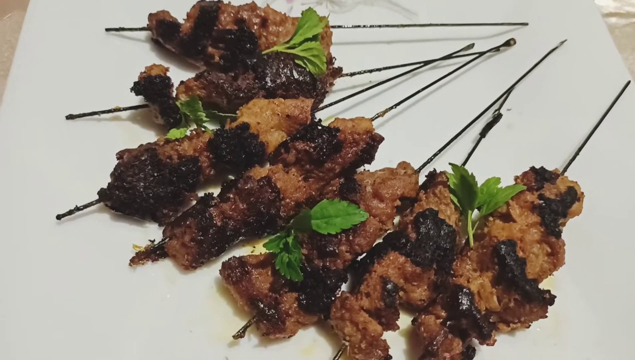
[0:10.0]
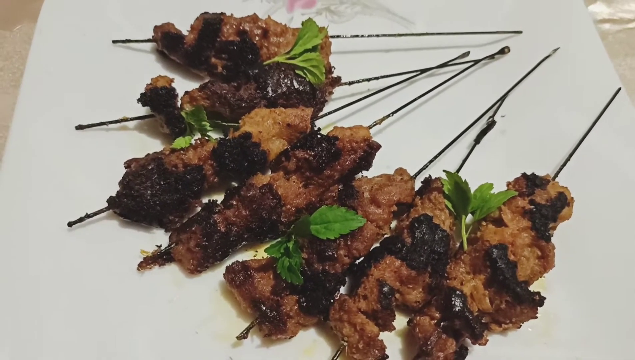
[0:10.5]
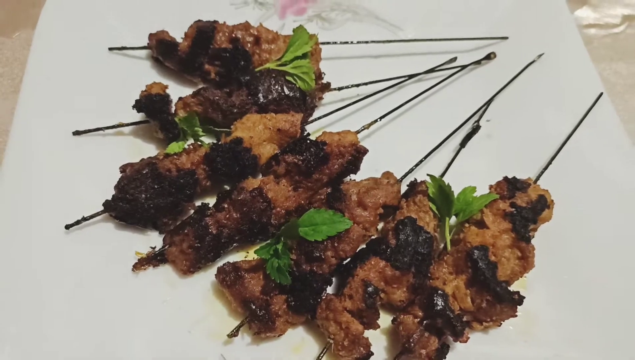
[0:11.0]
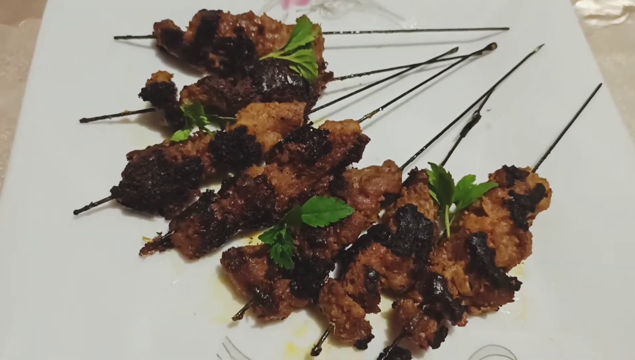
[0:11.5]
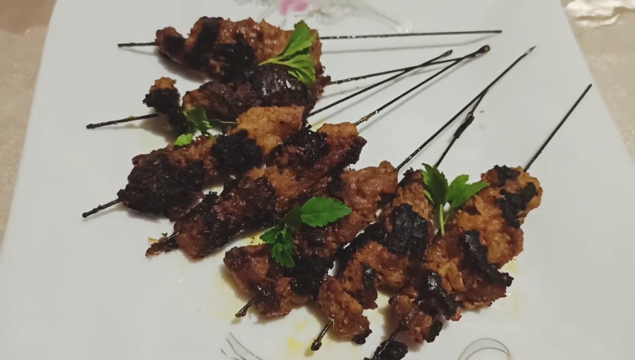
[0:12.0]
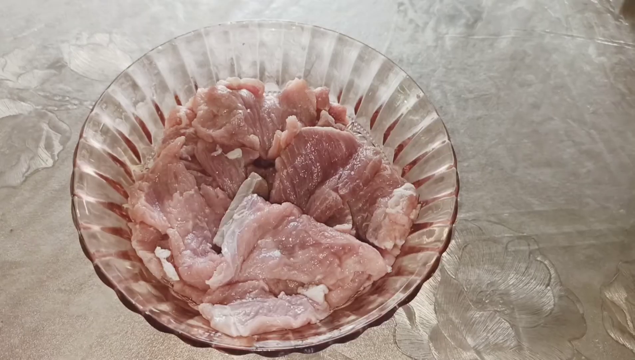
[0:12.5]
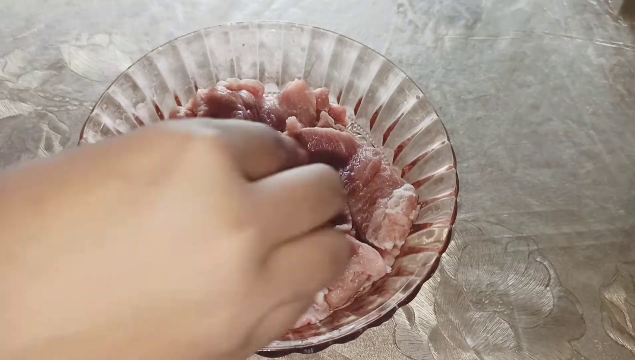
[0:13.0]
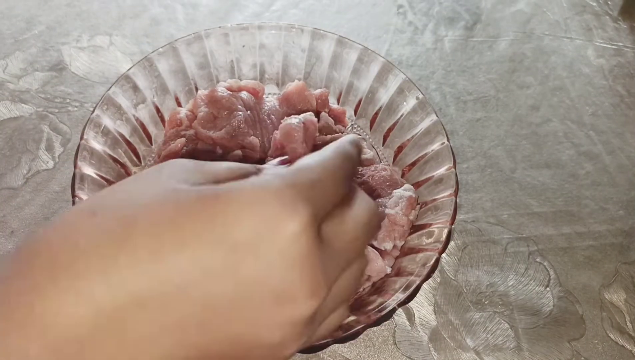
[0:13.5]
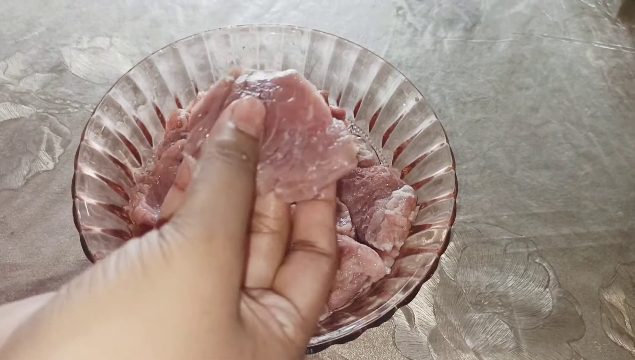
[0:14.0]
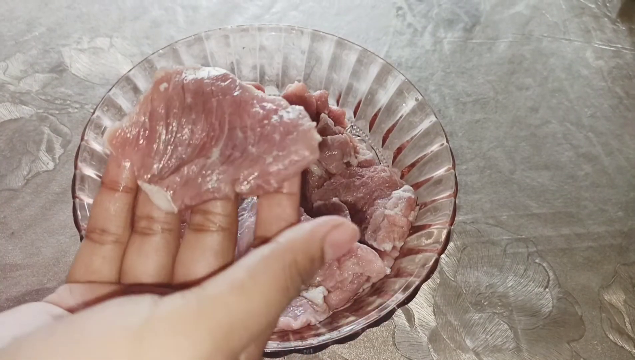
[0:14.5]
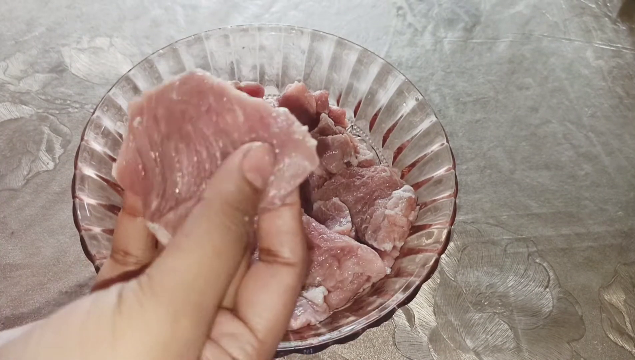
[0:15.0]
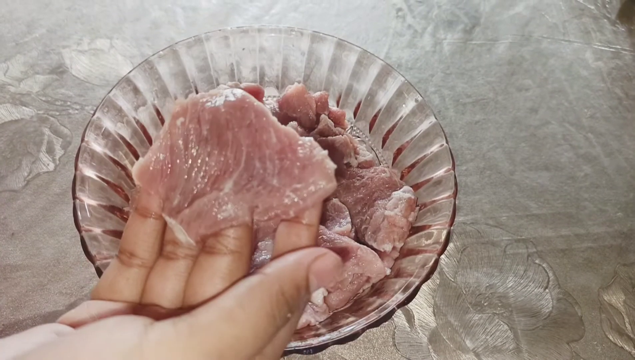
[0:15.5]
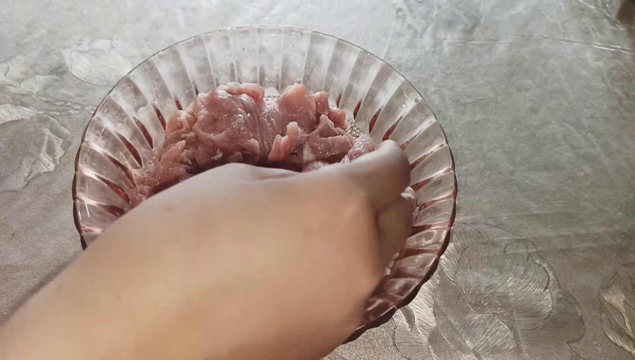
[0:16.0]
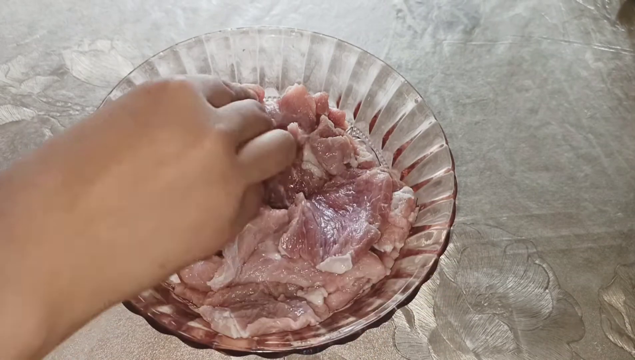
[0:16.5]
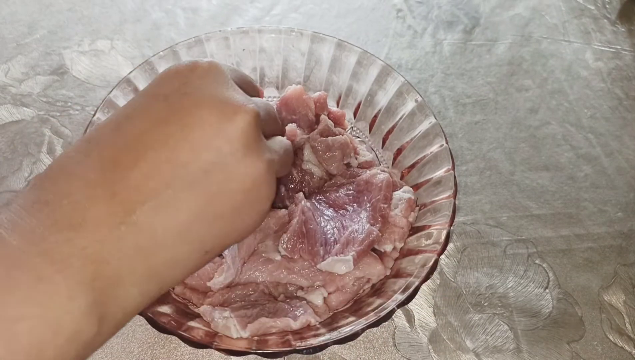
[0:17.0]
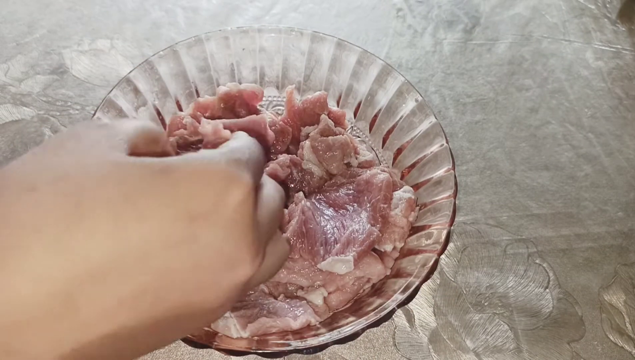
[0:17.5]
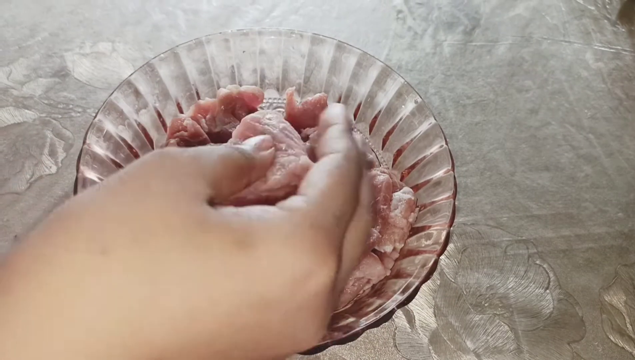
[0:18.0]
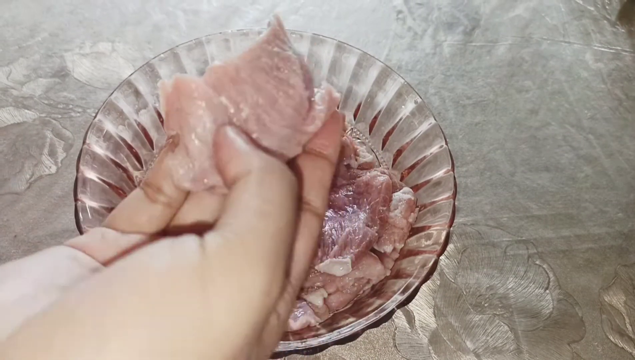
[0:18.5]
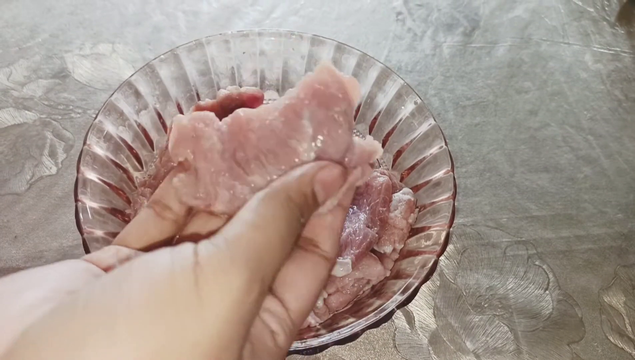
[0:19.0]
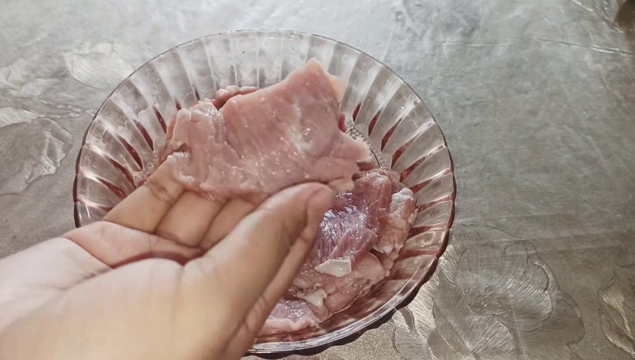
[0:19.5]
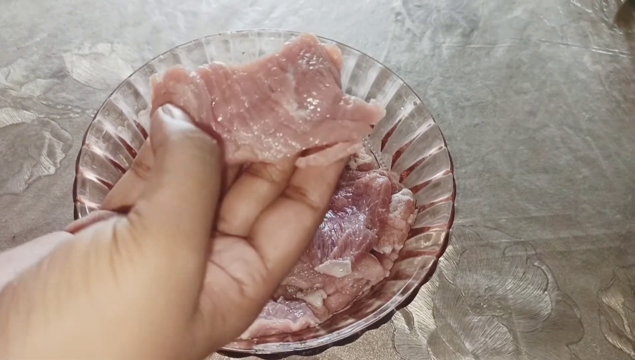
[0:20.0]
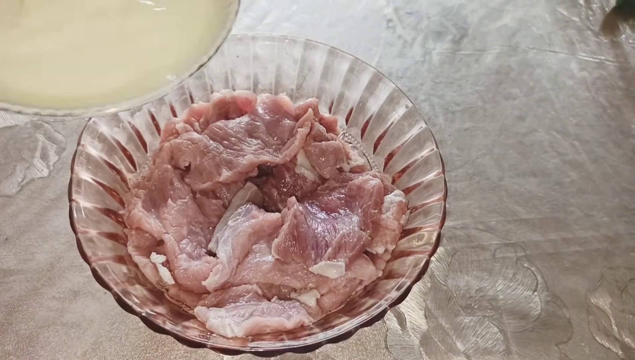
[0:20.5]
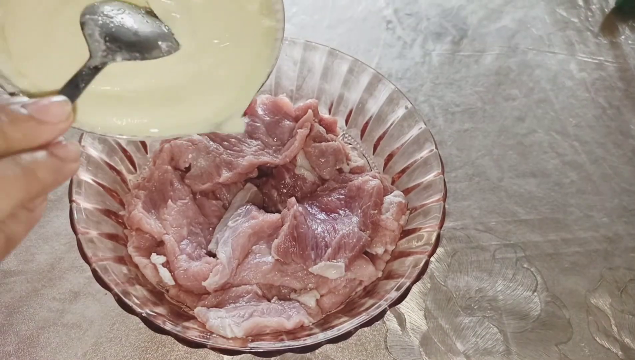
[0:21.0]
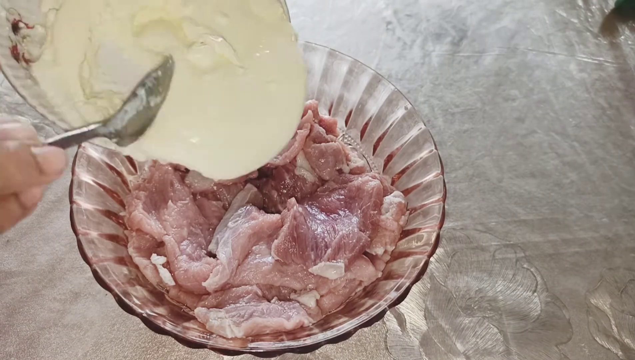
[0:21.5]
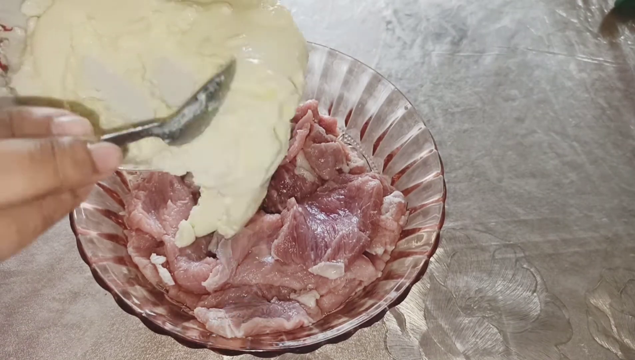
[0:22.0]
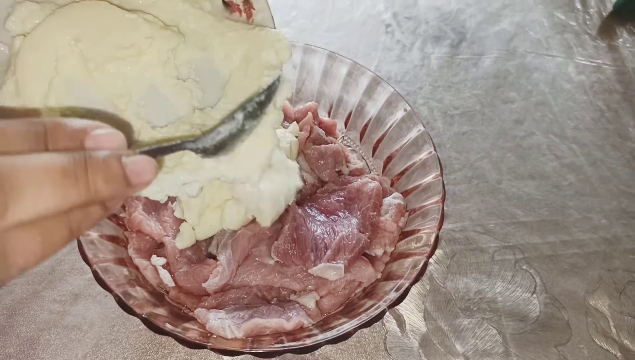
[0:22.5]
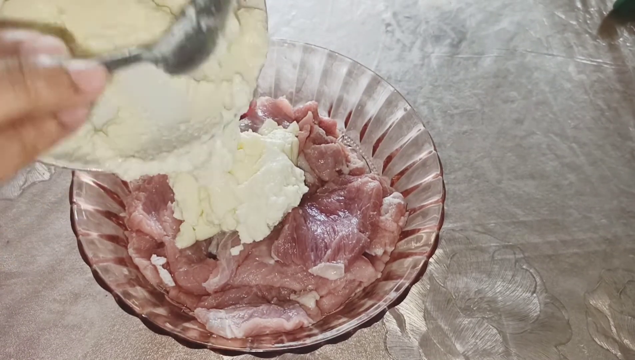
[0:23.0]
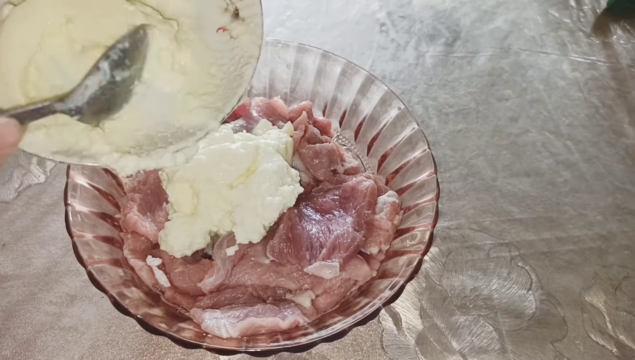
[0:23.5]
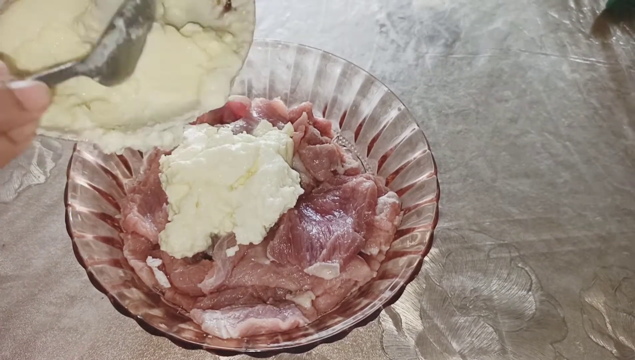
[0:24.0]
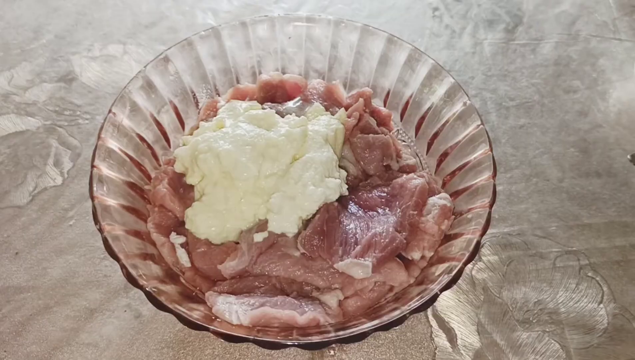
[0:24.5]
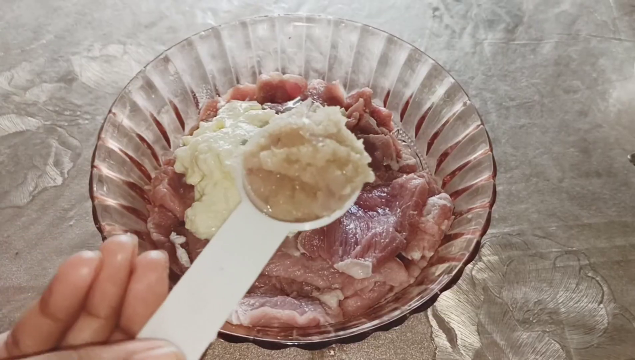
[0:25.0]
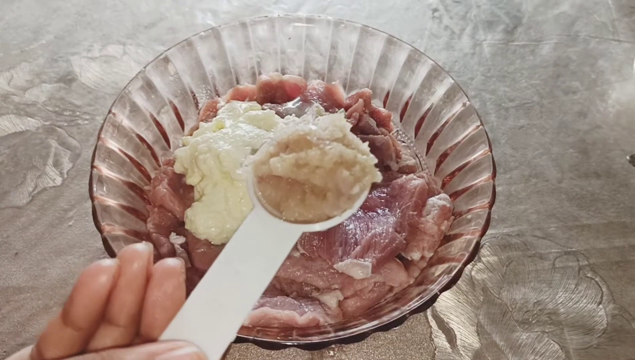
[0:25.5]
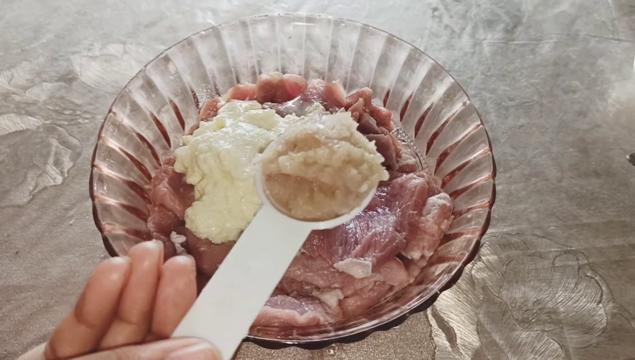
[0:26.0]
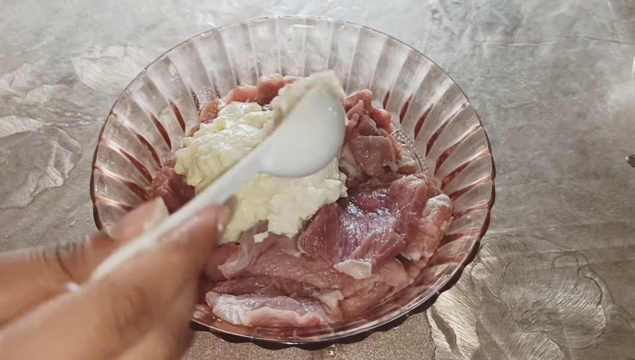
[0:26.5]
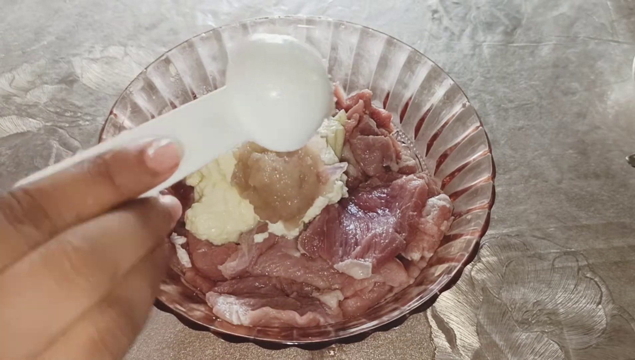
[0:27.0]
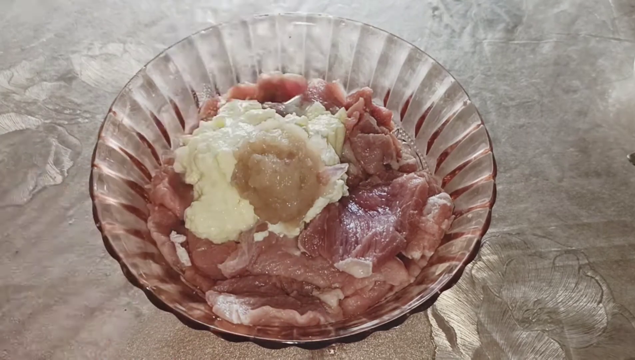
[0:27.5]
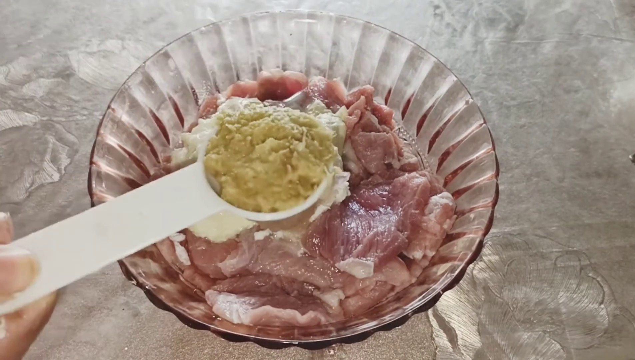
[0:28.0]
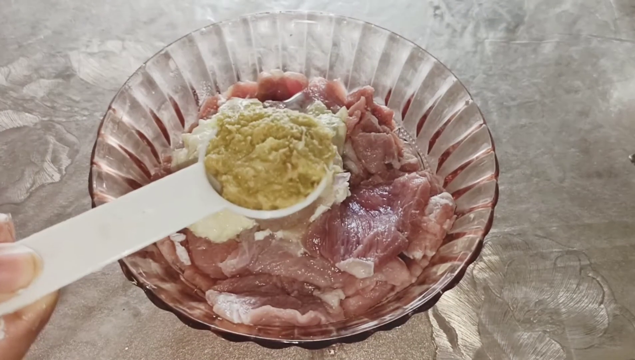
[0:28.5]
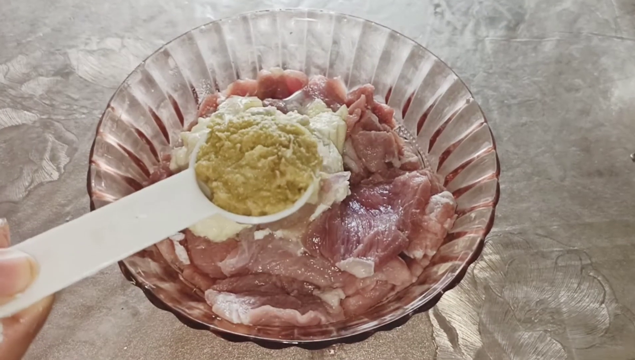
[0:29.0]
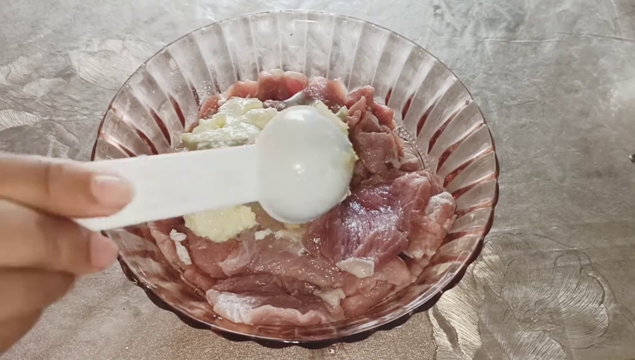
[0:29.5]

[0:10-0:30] Meat skewers are laid out next to one another on a white plate with floral pattern designs, and they appear to be cooked. The video then transitions to cut fillets of meat in a clear bowl with a ribbed pattern design around the outside. A hand reaches in, picks up one of the fillet cutlets and shows it to the camera. Next, a cream is added from a white bowl, along with two scoops of an unidentifiable dish or seasoning, each appearing to be about one tablespoon in size. One is light brown and the other is a darker brown. Both scoops are dumped into the bowl on top of the mixture before it is mixed in.